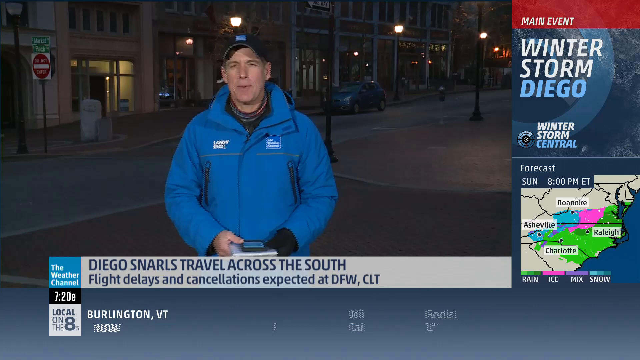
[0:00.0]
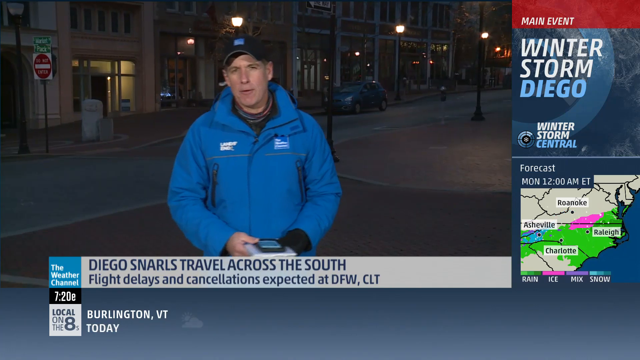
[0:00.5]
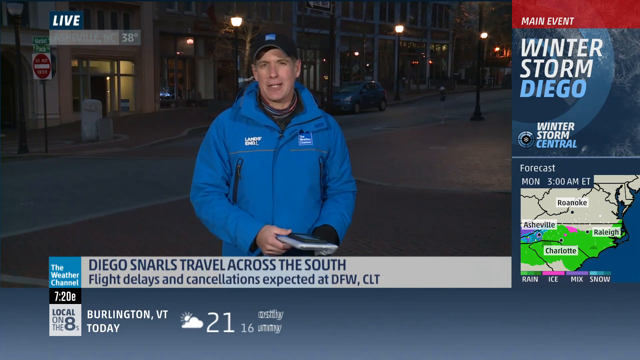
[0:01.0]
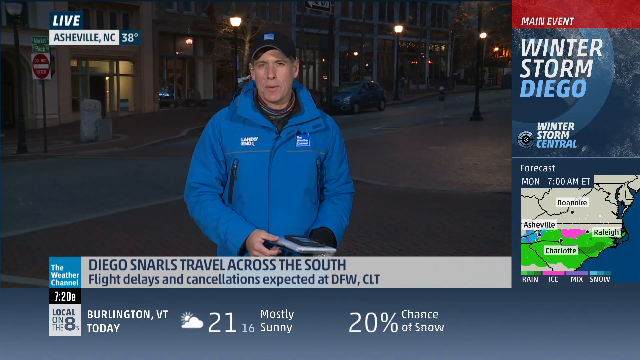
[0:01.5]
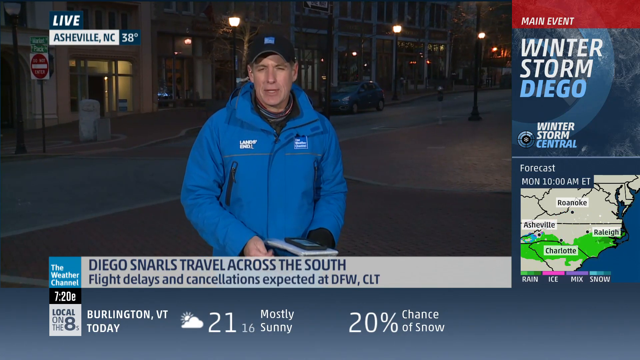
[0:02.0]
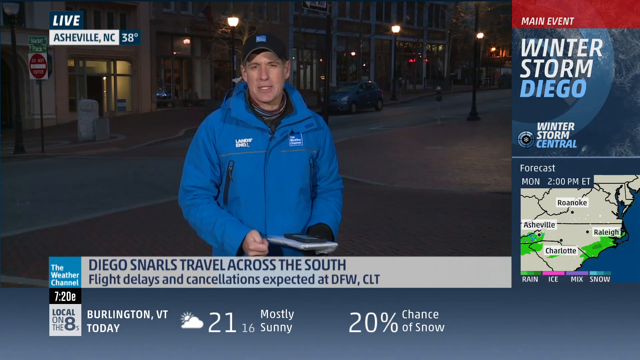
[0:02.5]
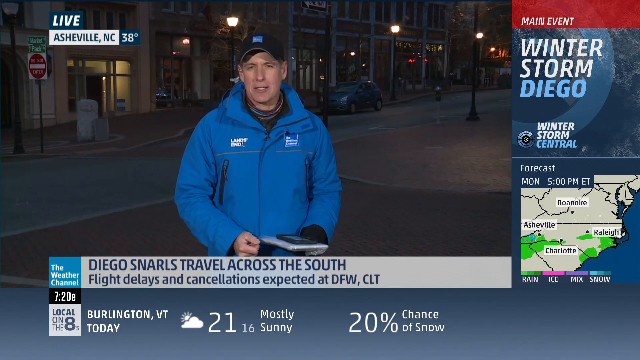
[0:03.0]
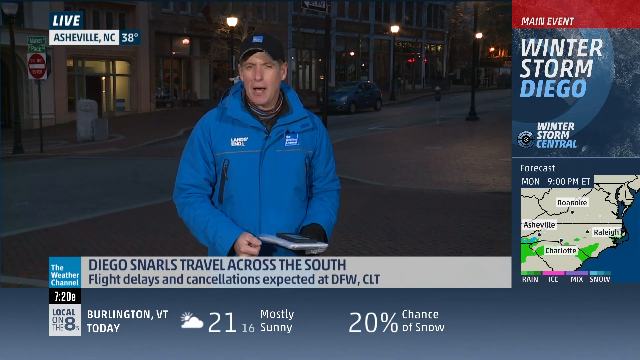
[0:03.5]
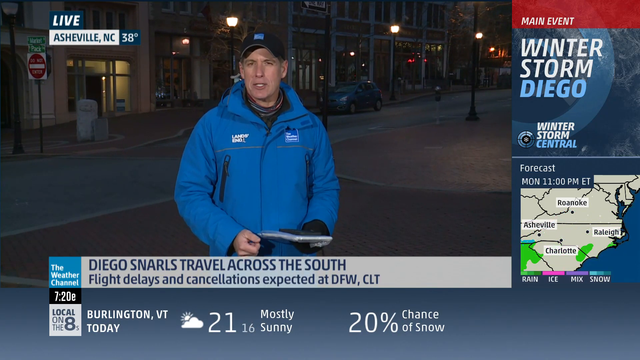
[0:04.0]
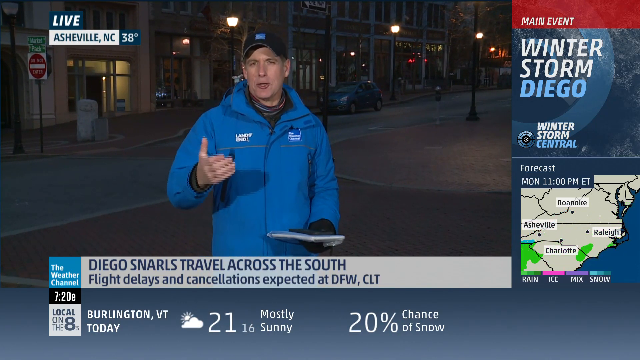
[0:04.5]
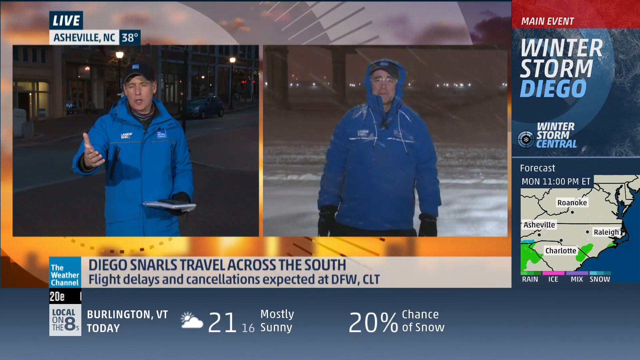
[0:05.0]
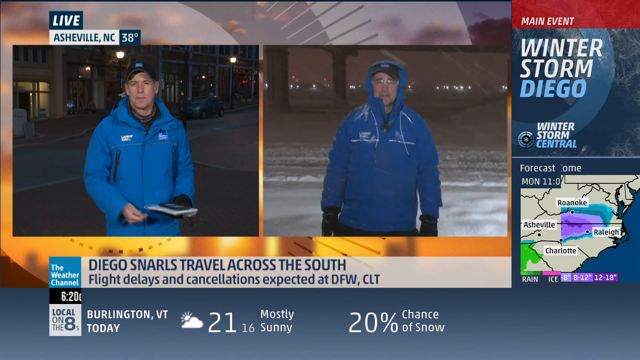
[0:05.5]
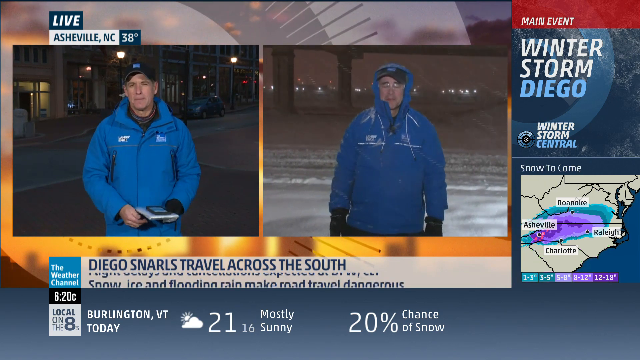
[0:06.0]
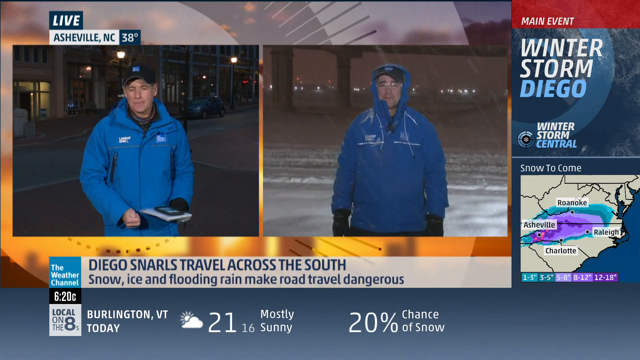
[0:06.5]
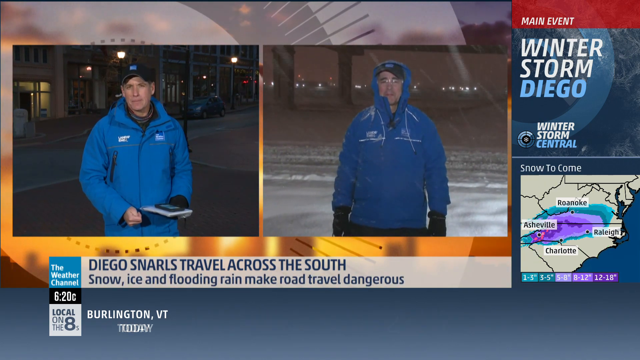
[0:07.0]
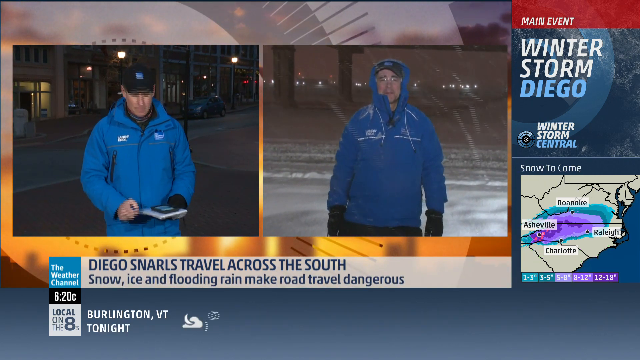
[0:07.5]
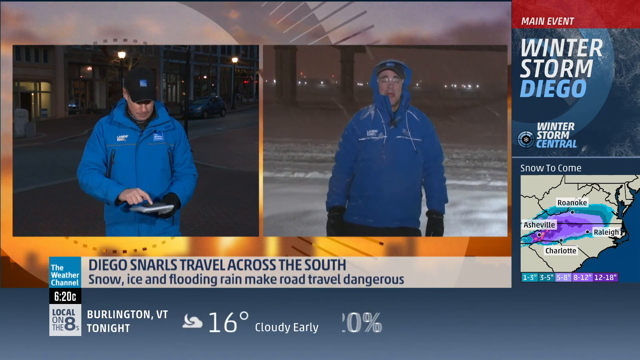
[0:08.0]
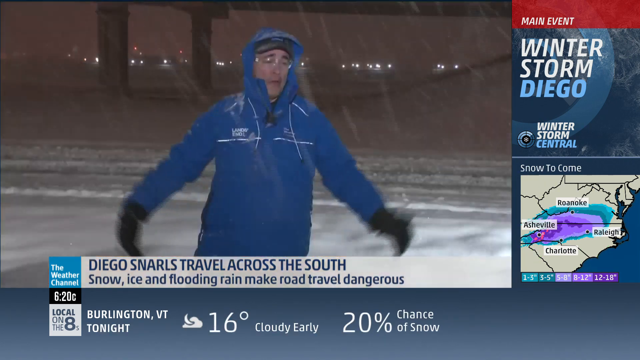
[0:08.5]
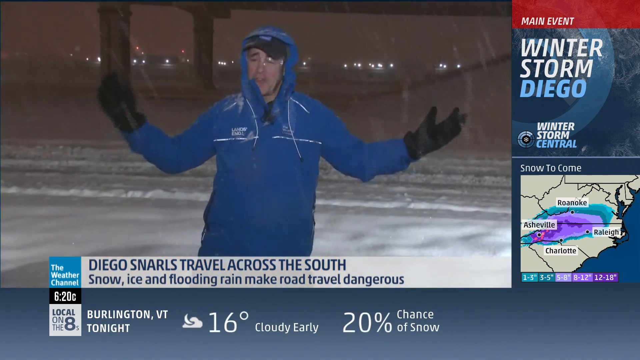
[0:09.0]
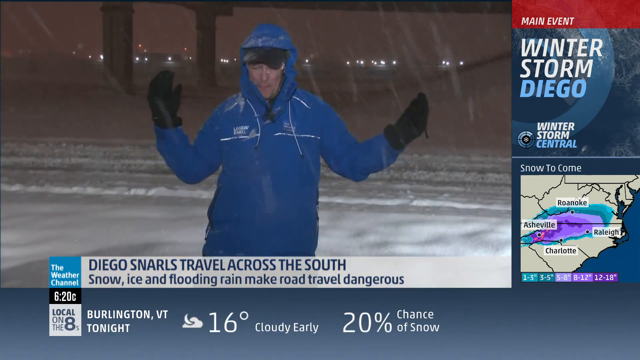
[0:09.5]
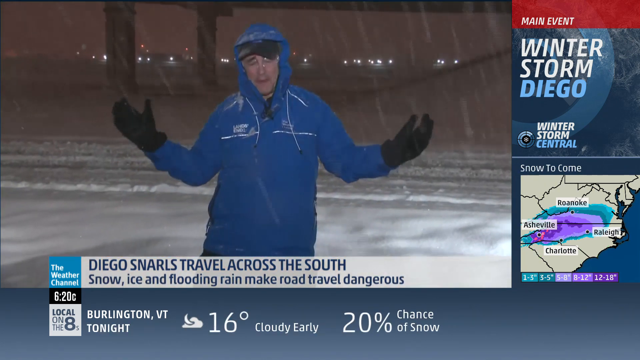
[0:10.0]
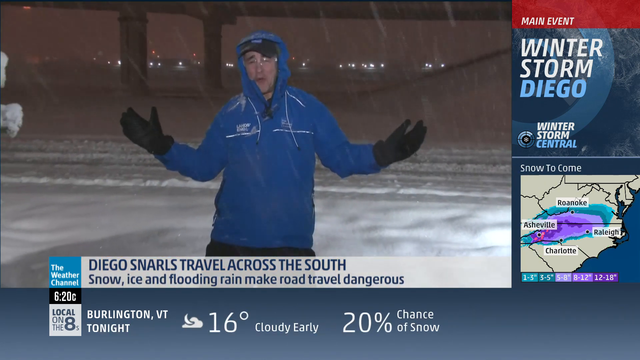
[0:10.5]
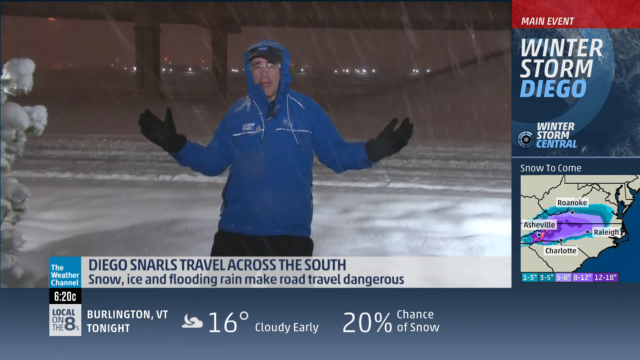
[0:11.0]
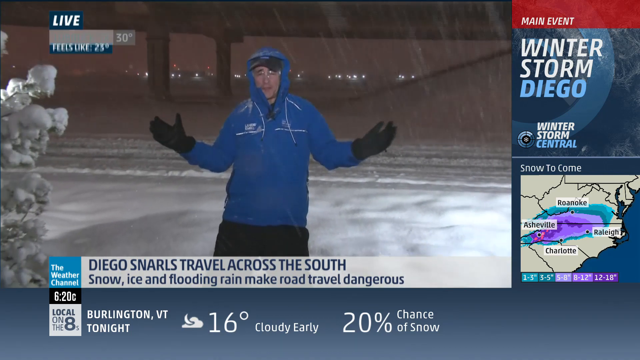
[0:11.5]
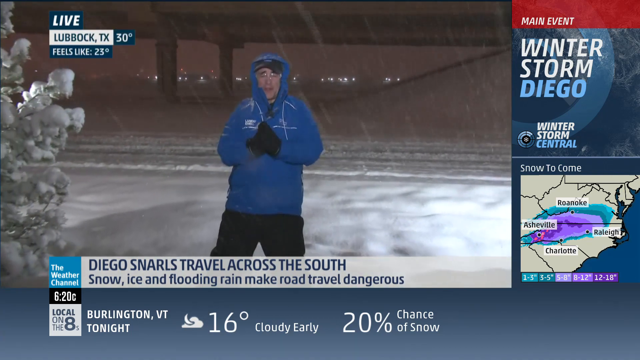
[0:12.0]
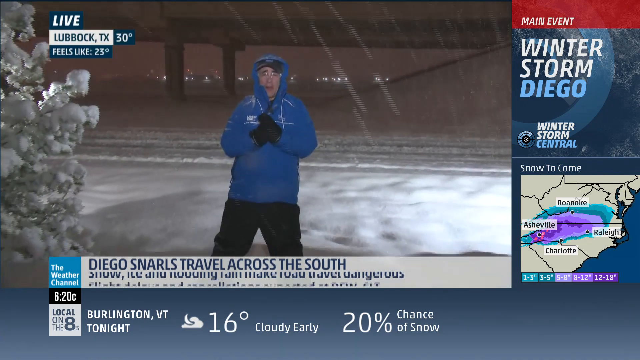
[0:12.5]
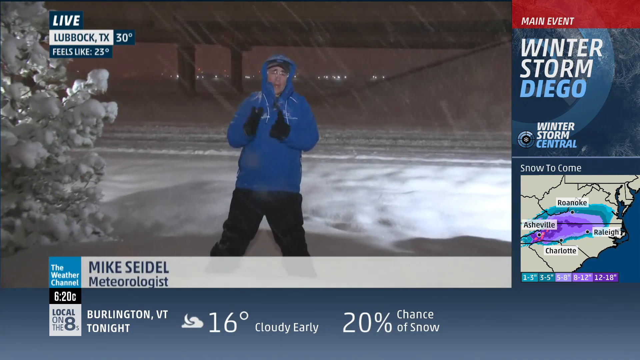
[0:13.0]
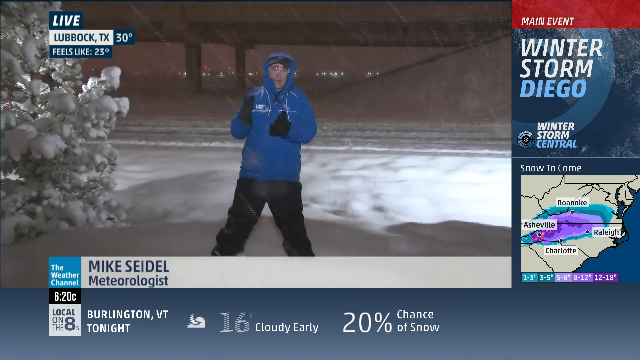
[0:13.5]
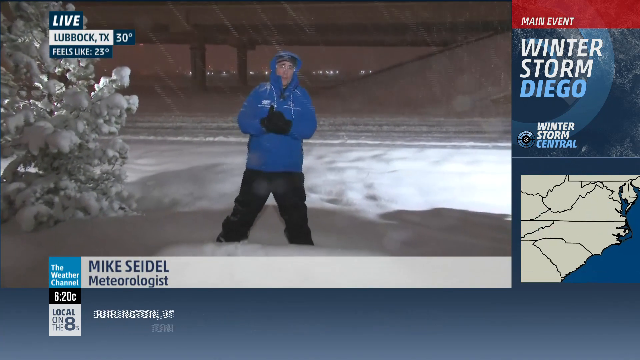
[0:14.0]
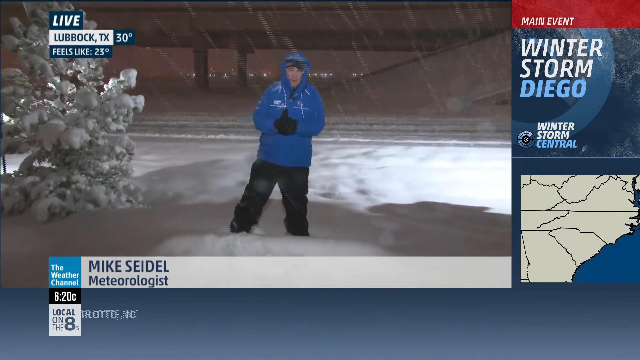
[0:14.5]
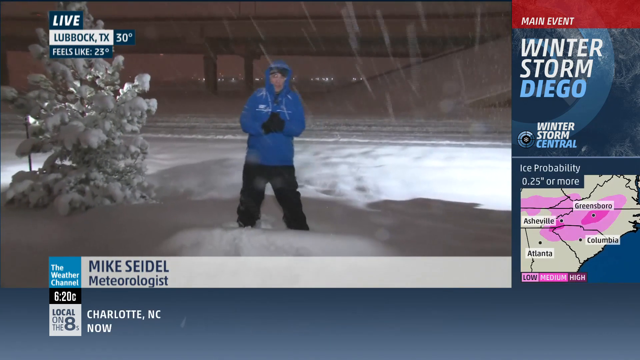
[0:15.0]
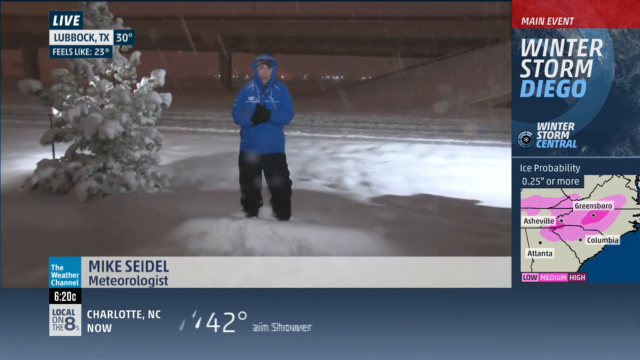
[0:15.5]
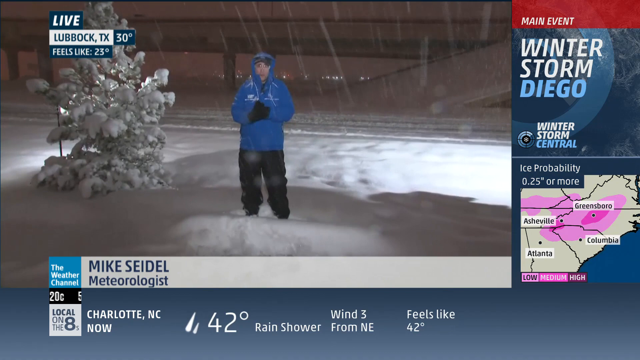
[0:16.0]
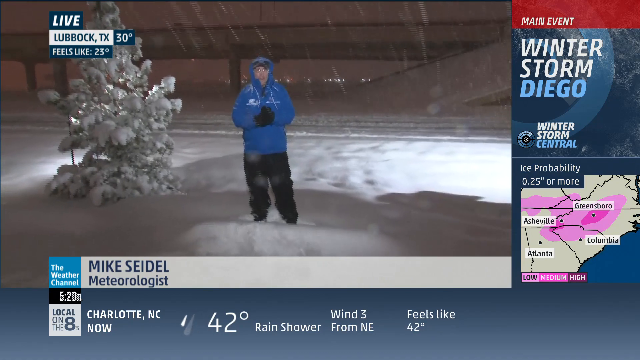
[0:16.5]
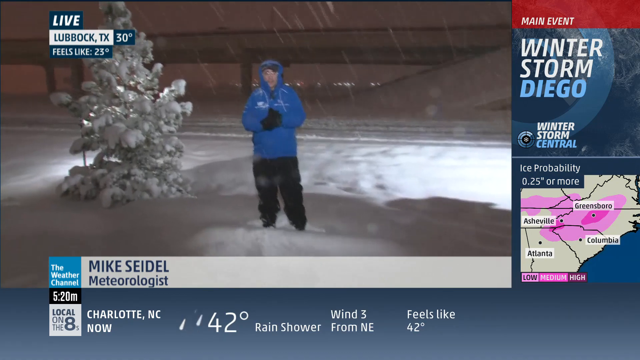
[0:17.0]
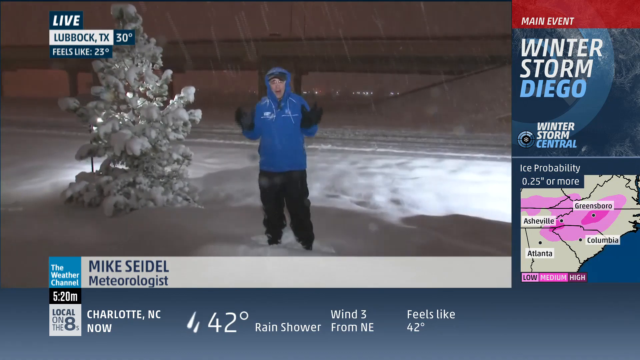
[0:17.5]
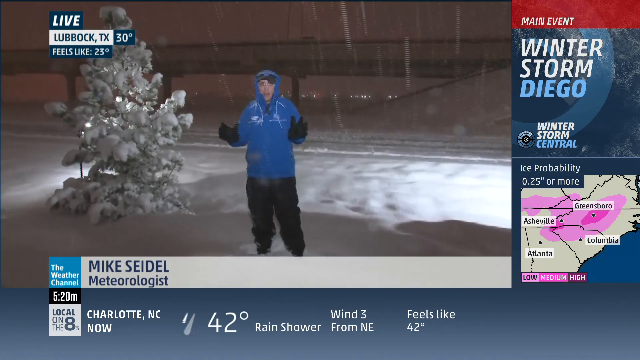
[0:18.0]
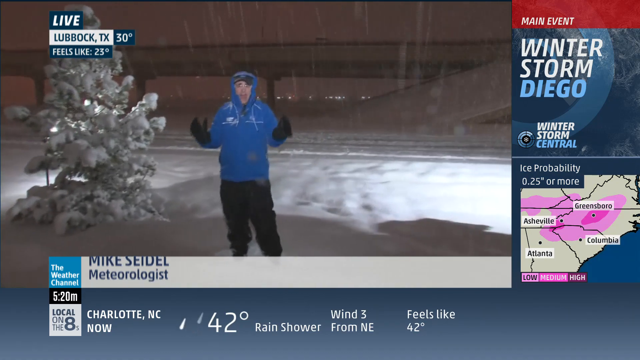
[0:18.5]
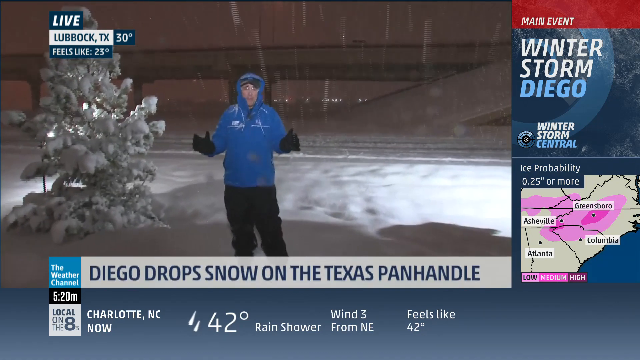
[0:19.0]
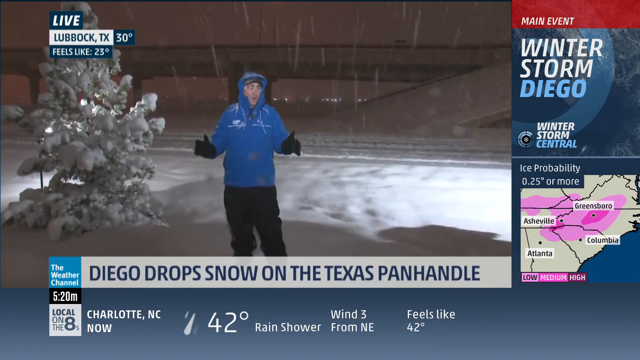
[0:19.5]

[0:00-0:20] A news broadcast on The Weather Channel carries the headline "Diego snarls travel across the south," with text stating that flight delays and cancellations are expected, listing "CLT" among the codes. The broadcast is live in Asheville, NC, where the temperature is 38 degrees. A forecast for Monday at 11 a.m. ET covers Roanoke, Asheville, Charlotte and Raleigh. The second presenter is Mike Seidel, a meteorologist, live in Lubbock, TX, where it is 30 degrees. The whole place is covered in snow. The news presenter wears a blue jacket, a black cap and one glove, and holds a white tablet in his hands. The time is around 7 p.m. The setting then changes to another news presenter at a location where it is snowing, with more snow around than at the first newsreader's location.